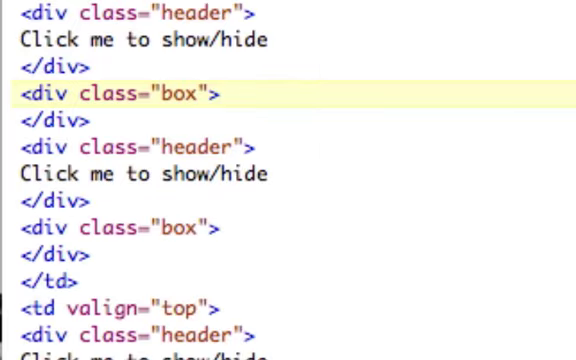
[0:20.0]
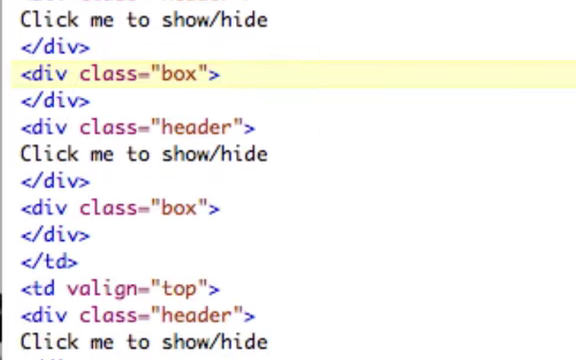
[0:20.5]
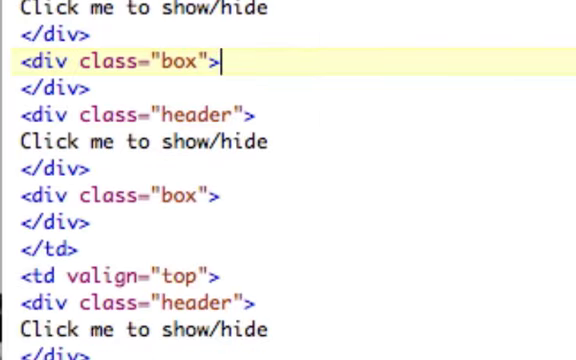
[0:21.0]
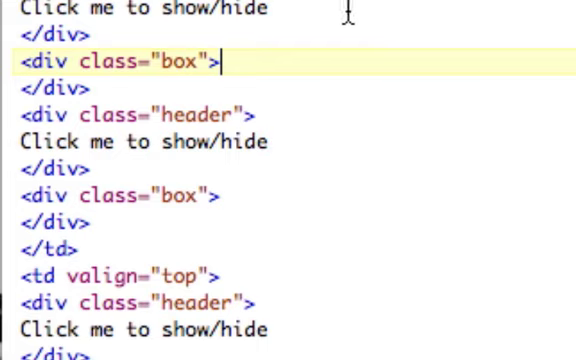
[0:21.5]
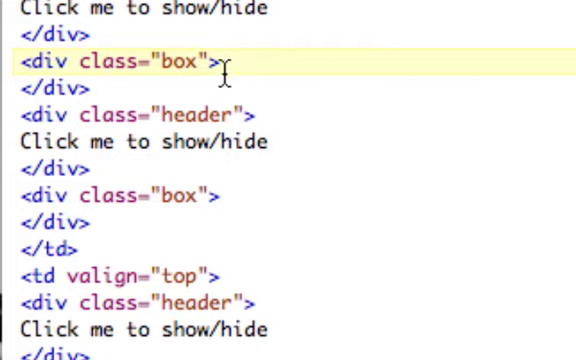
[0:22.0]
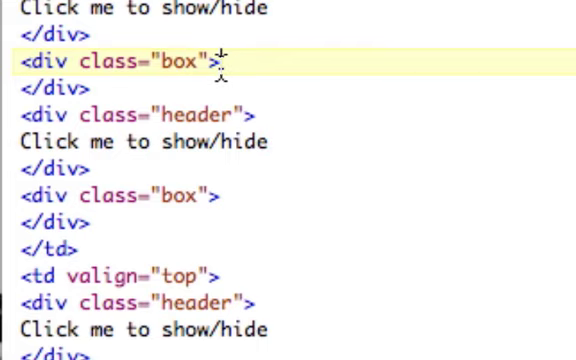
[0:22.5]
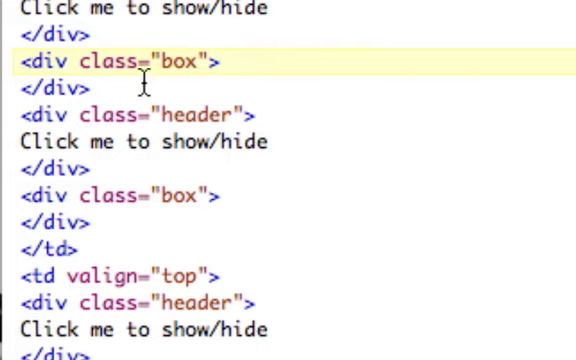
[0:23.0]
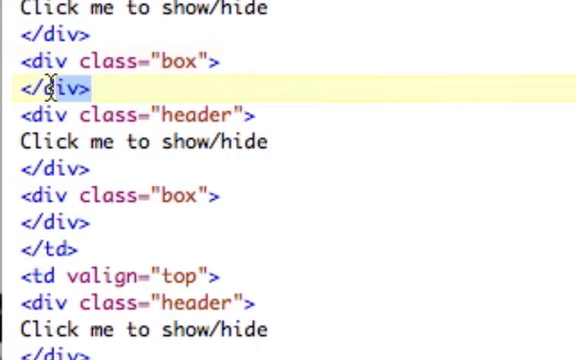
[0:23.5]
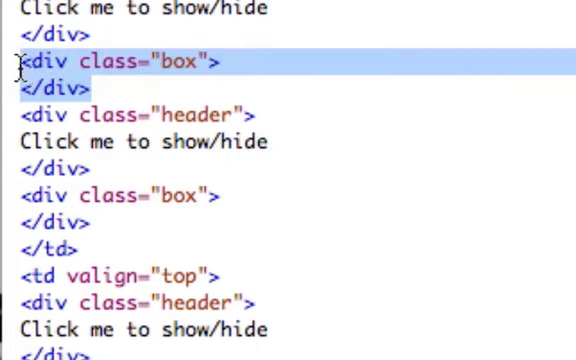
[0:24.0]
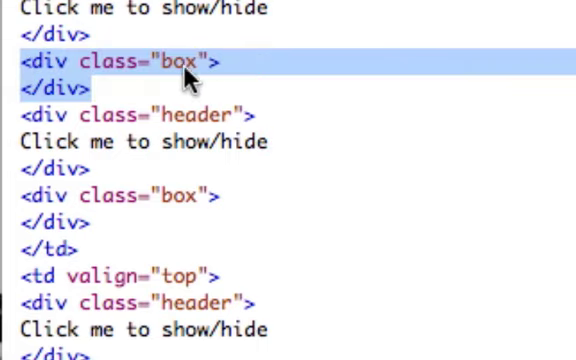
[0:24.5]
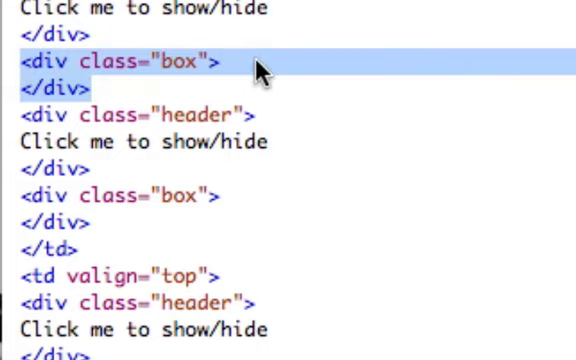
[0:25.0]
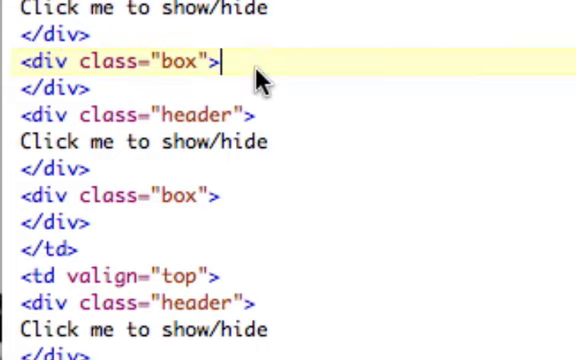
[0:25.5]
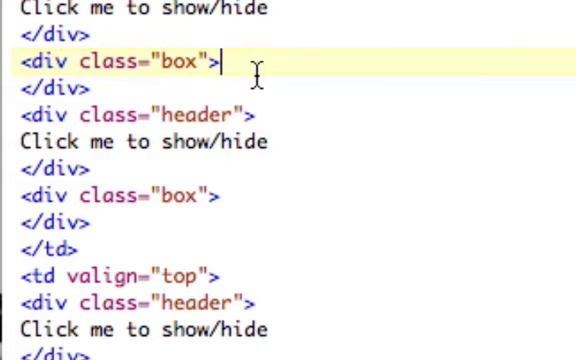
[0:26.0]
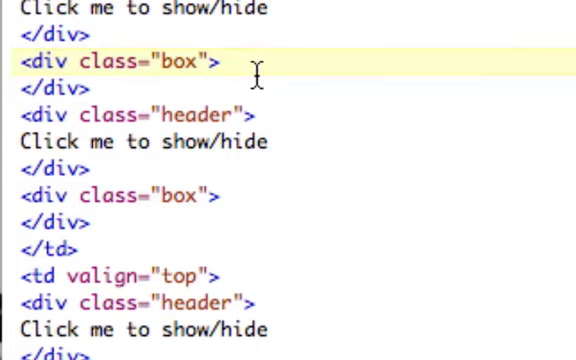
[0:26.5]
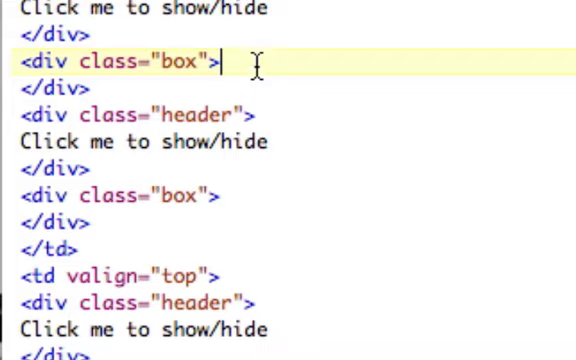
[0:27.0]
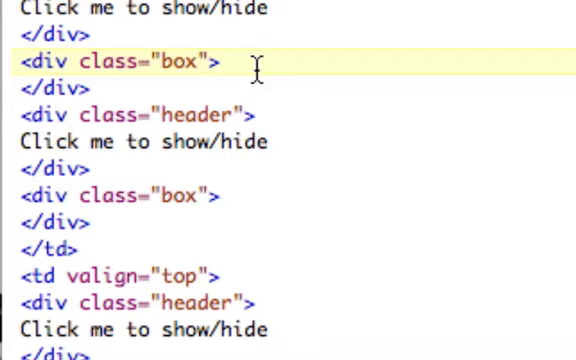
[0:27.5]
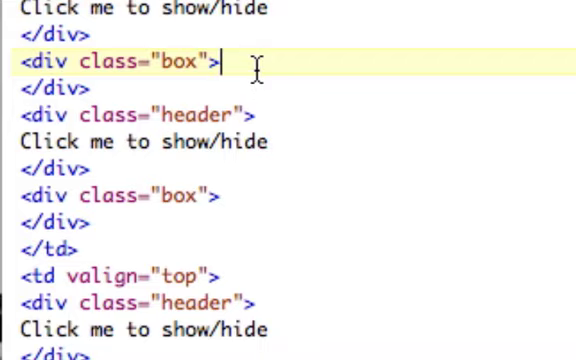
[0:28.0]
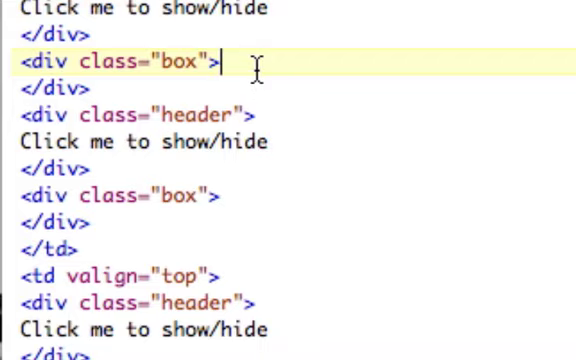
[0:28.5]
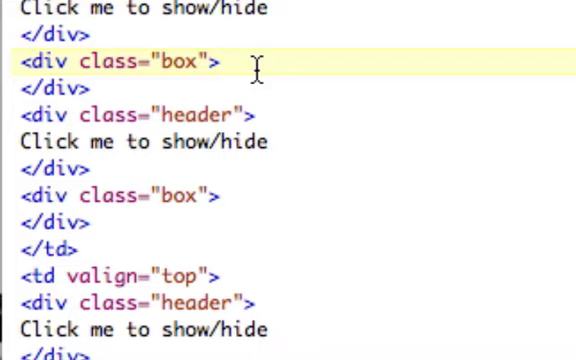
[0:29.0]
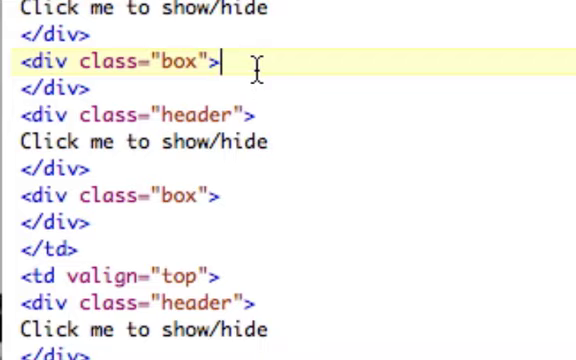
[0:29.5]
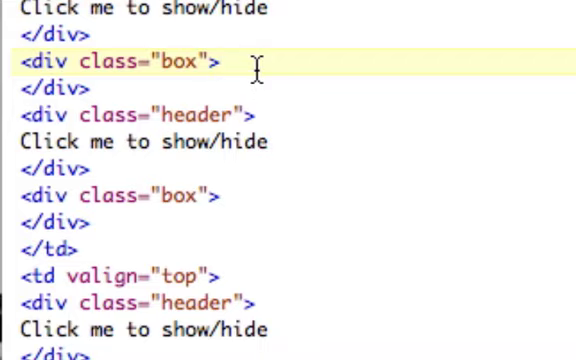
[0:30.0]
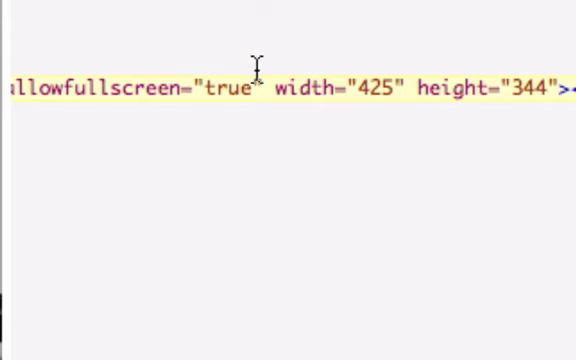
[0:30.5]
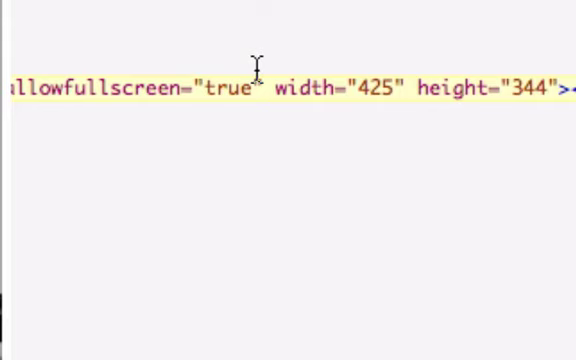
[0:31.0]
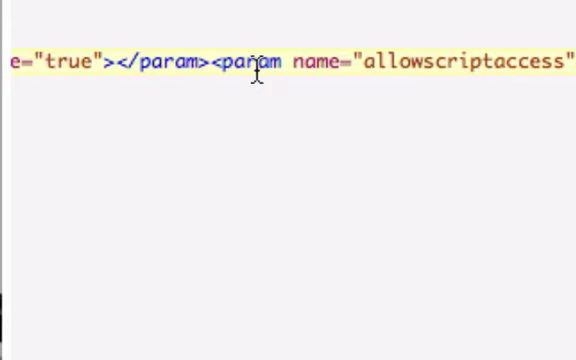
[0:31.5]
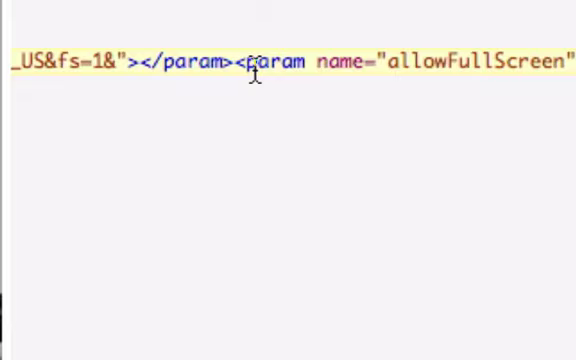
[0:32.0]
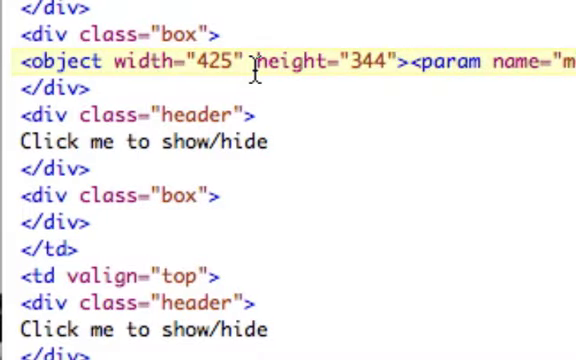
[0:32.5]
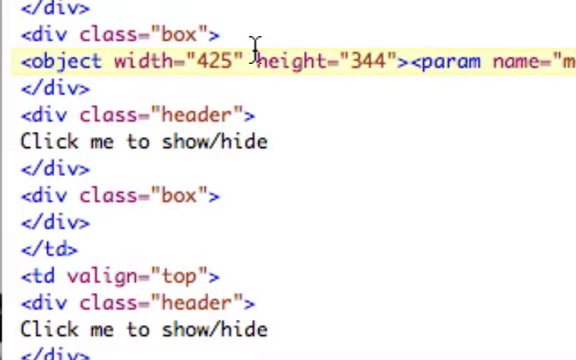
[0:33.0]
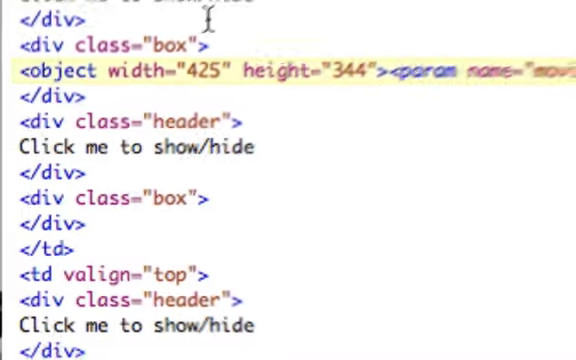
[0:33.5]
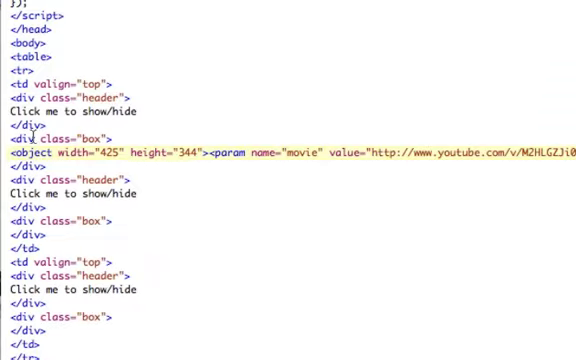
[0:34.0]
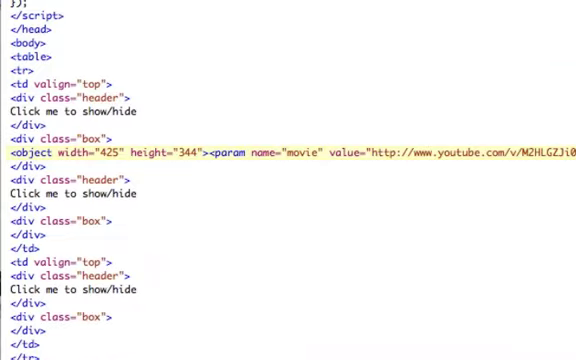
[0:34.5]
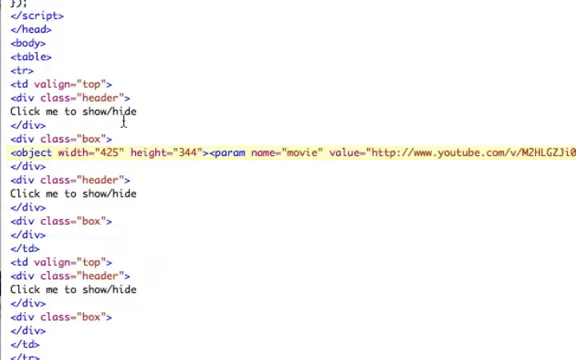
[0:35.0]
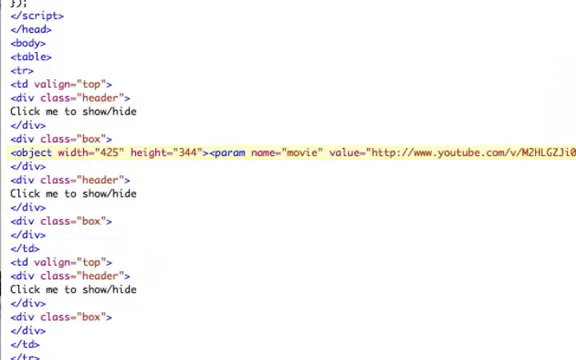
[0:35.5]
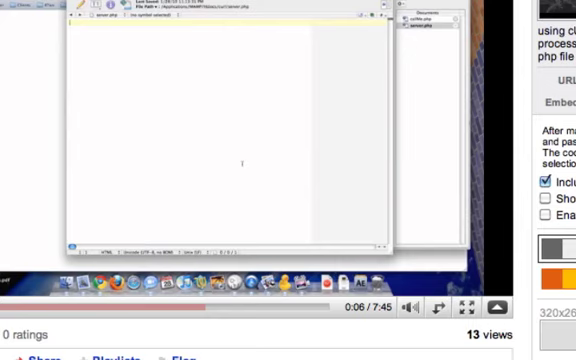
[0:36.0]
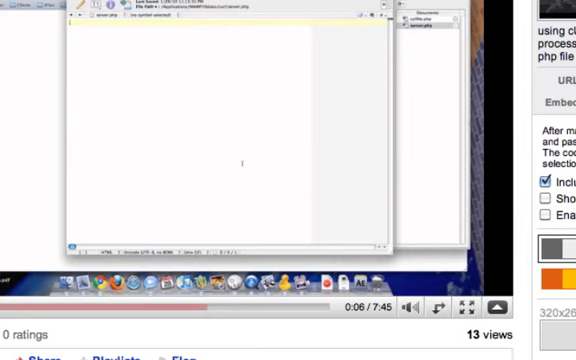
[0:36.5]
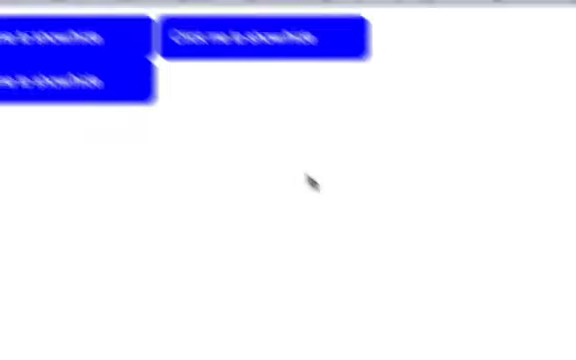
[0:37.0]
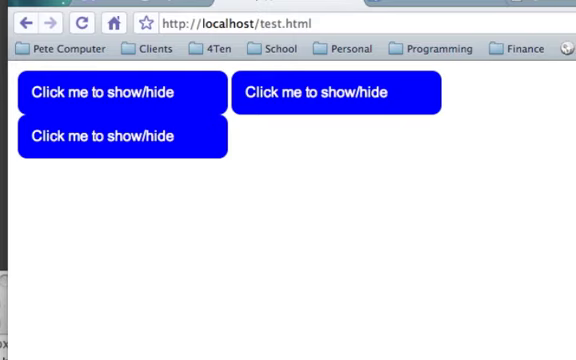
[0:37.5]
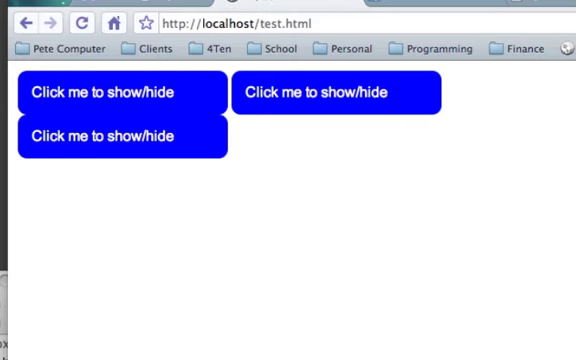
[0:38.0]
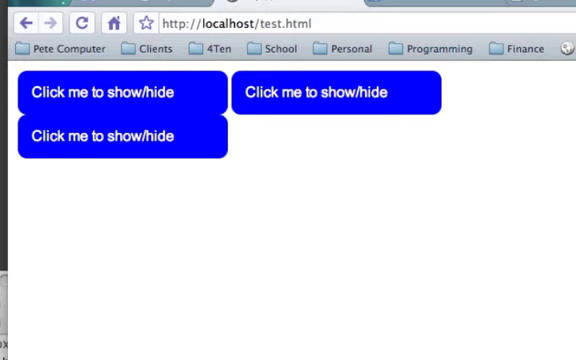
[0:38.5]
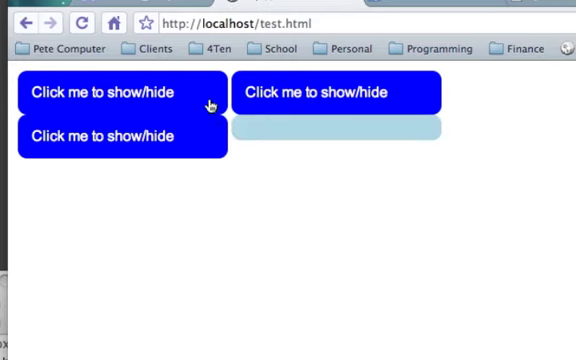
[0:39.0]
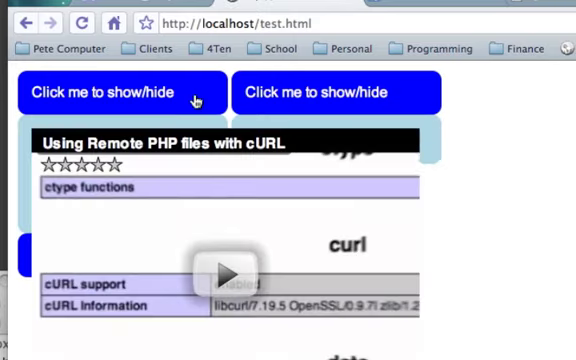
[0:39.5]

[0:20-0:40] Someone is recording their screen with a box of code open. The code reads "div class header, click me to show hide. Div div class box, div div class header, click me to show hide," essentially the same code for three identical boxes. The user scrolls down slowly, clicks on the first "div class equals box," highlights the full code and then unselects it. They right-click to the right of this line, press enter and paste an embed link from a YouTube video. They then minimize the code window, revealing a browser tab with a localhost test screen containing three blue boxes, all reading "click me to show / hide" in white text. They click on the top left one, which expands to show a YouTube video embedded in the window.